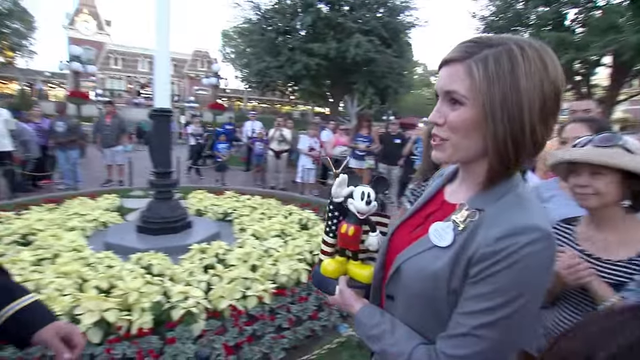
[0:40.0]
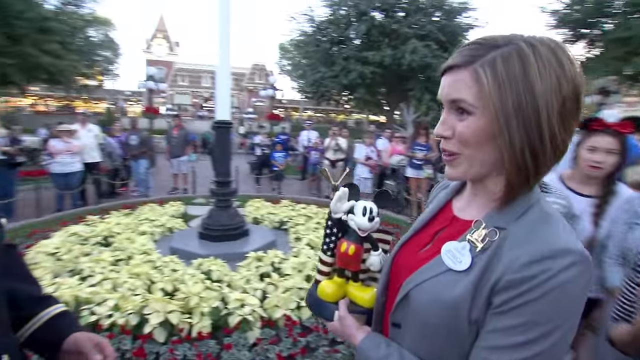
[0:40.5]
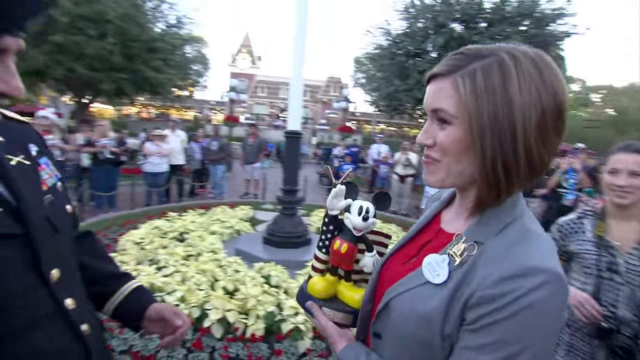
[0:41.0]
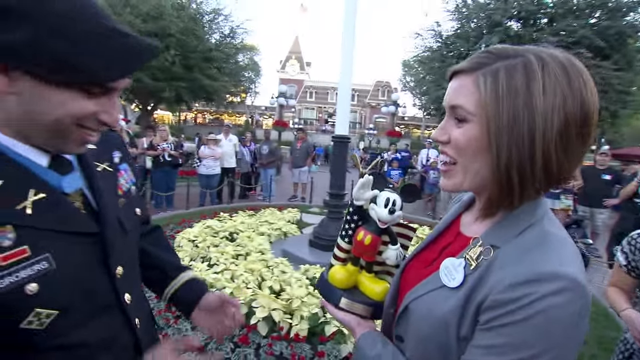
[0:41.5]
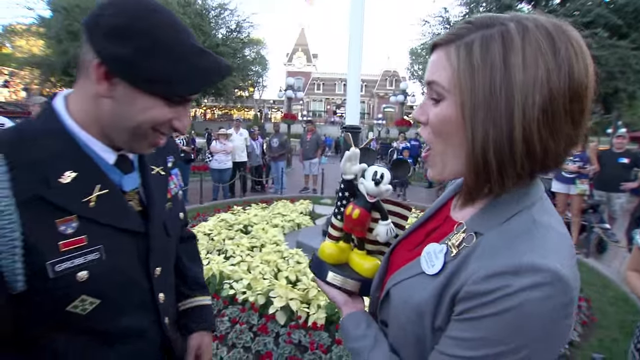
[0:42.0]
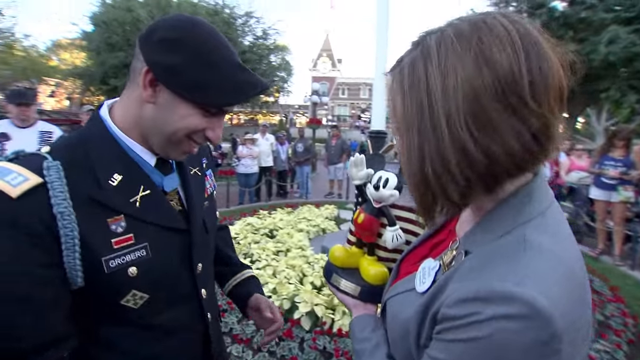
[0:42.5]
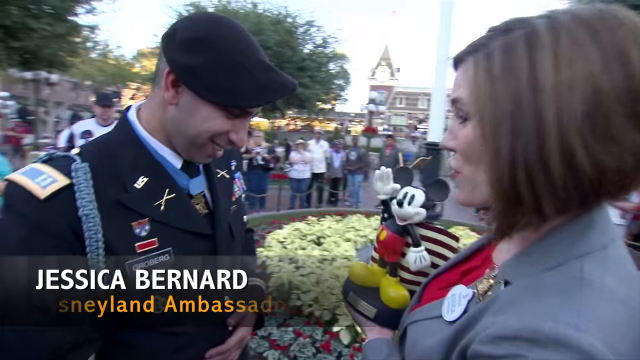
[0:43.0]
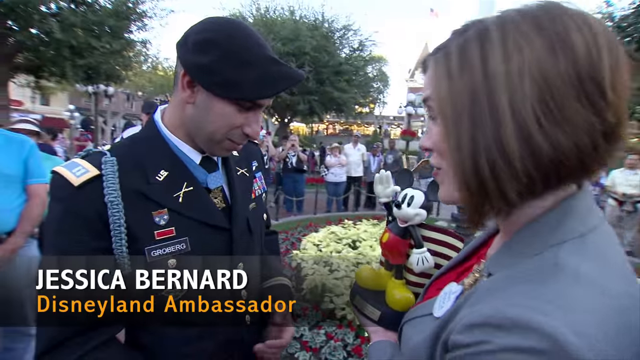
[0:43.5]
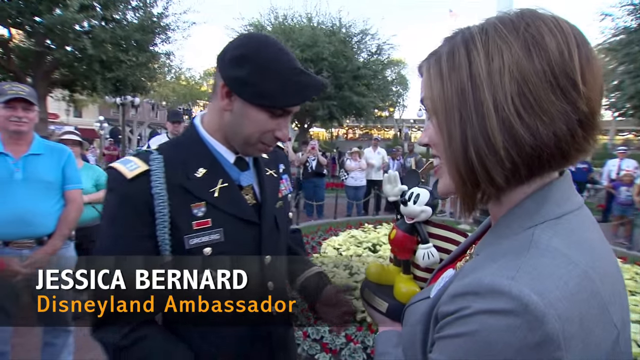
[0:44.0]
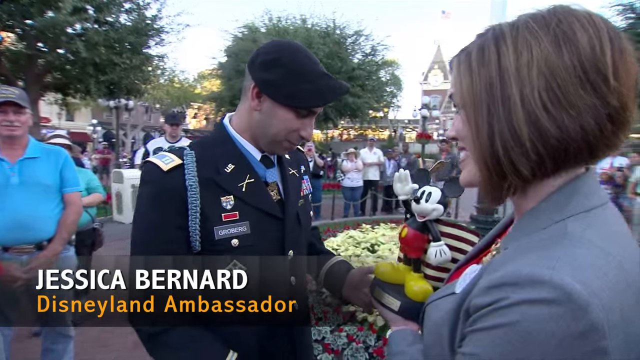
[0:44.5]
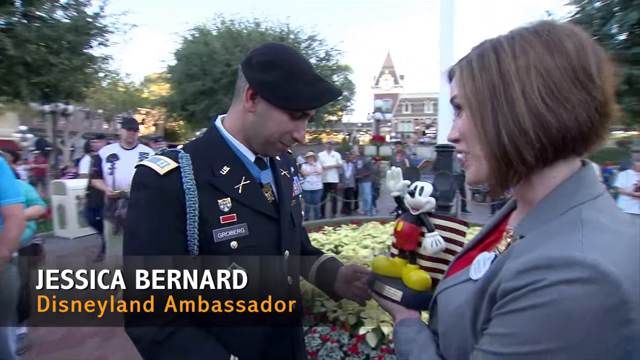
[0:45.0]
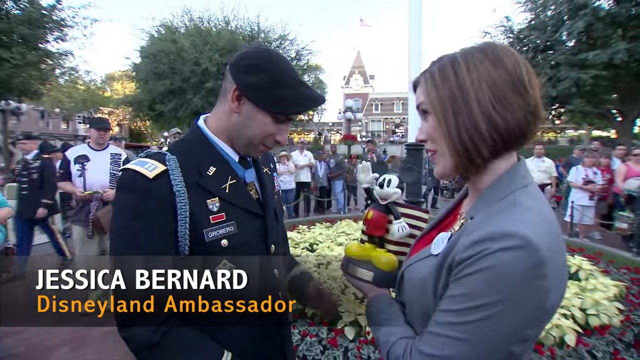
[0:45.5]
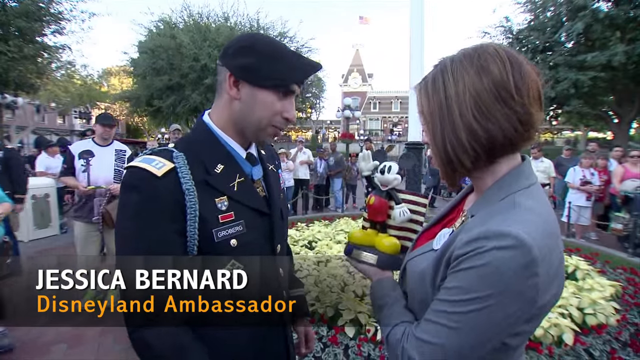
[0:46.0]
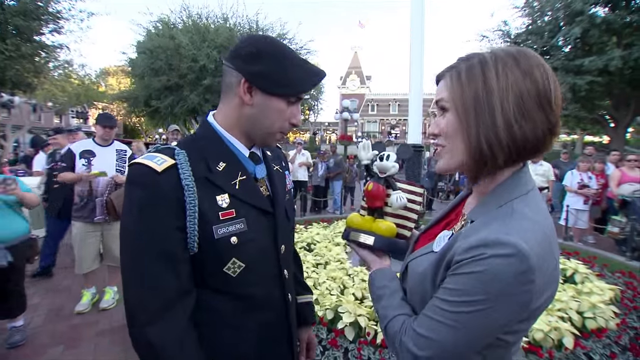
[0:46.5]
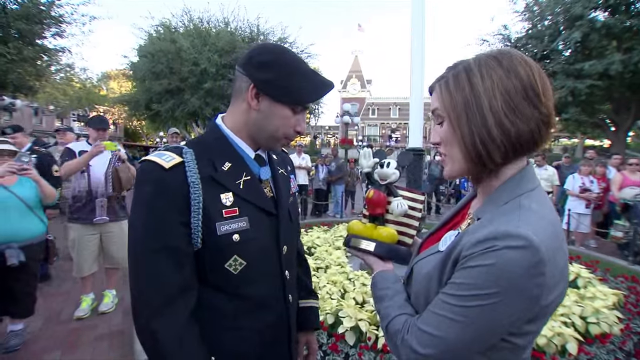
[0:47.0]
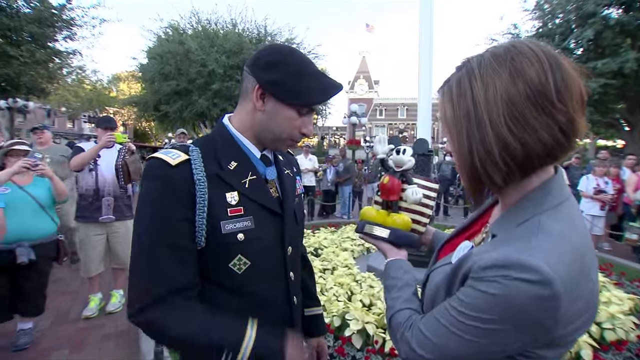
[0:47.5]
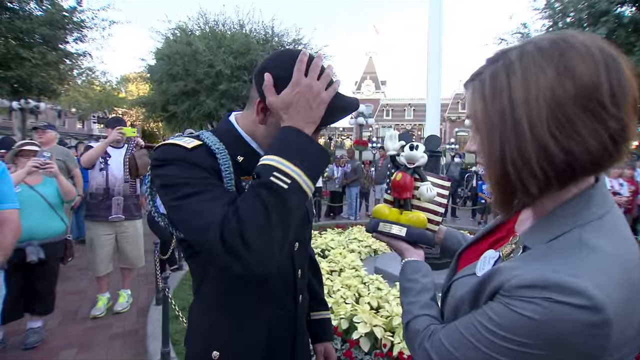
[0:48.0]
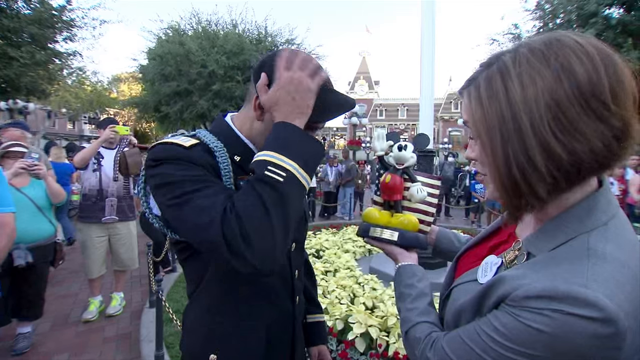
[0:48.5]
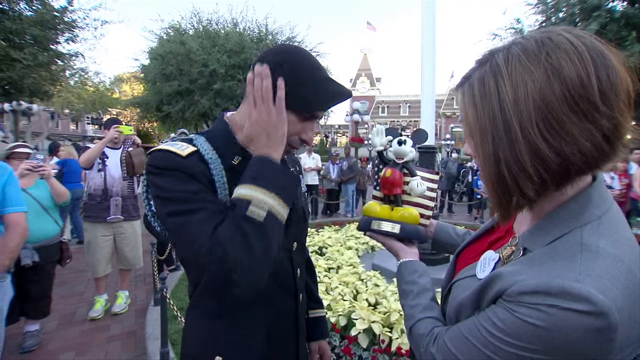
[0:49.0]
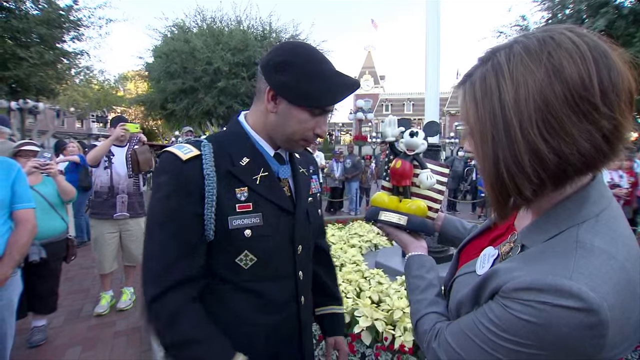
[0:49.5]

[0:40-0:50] Captain Groberg is presented with a large Mickey Mouse statue by a woman who looks like she may be a Disney executive. She wears a gray blazer over a red shirt, has short brown hair, and appears to be in her 30s or 40s. She talks while presenting the statue, and he looks at it. In the lower left, text in white capital letters reads "Jessica Bernard," with "Disneyland Ambassador" in gold underneath, apparently identifying her. She shows off the statue: Mickey Mouse stands on a little platform with an American flag behind him. White poinsettias and many people are in the background. The captain wears a black army beret.